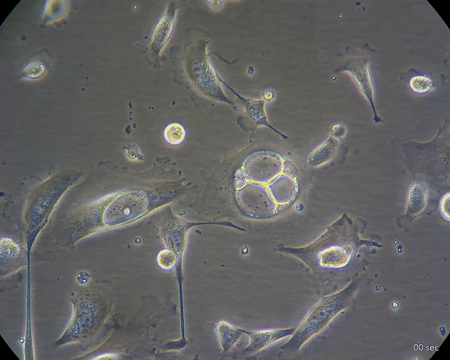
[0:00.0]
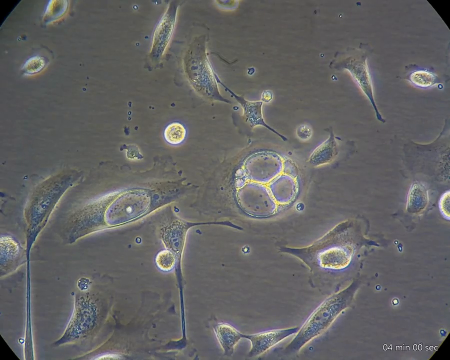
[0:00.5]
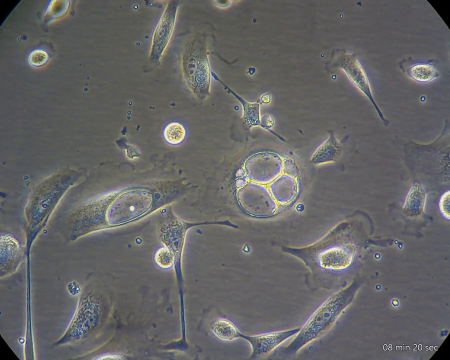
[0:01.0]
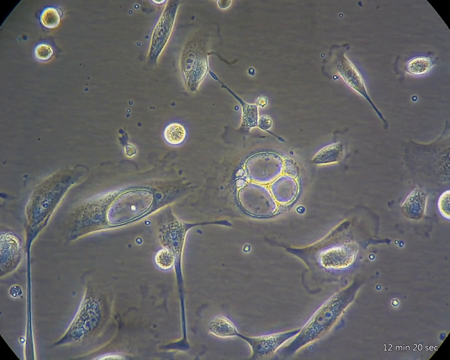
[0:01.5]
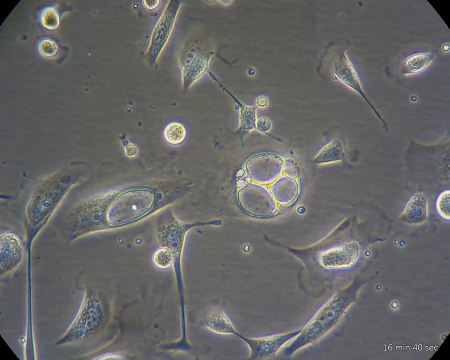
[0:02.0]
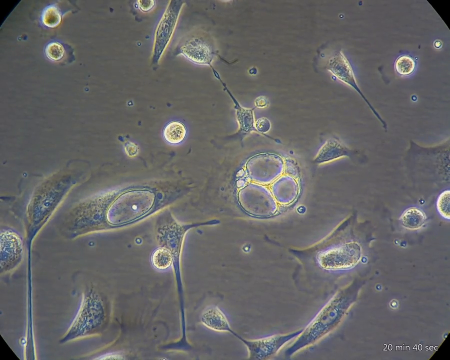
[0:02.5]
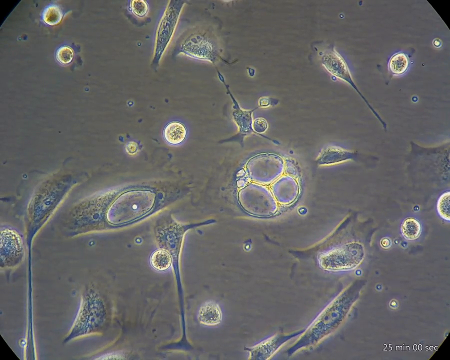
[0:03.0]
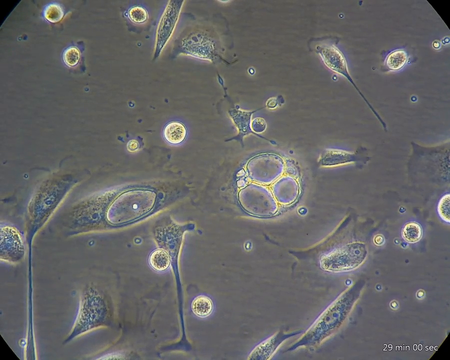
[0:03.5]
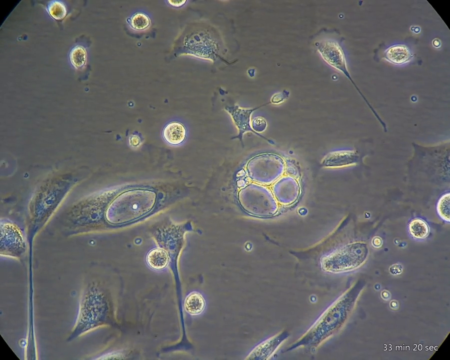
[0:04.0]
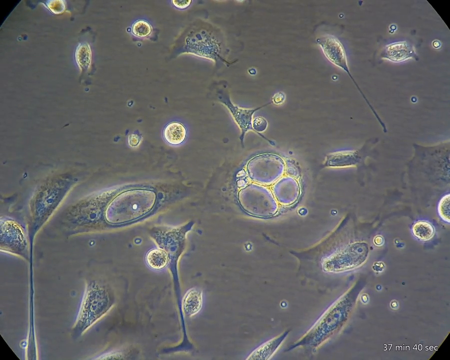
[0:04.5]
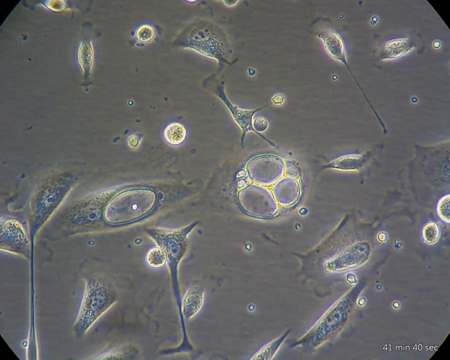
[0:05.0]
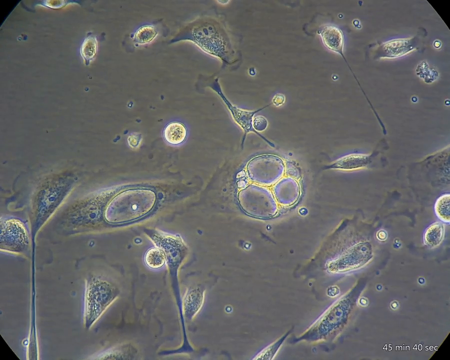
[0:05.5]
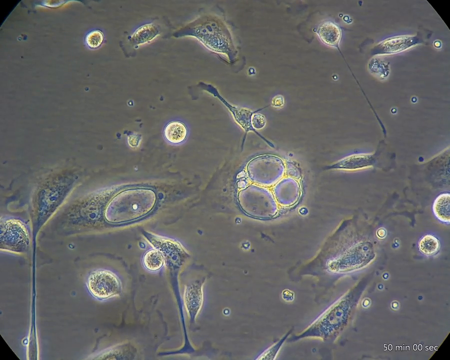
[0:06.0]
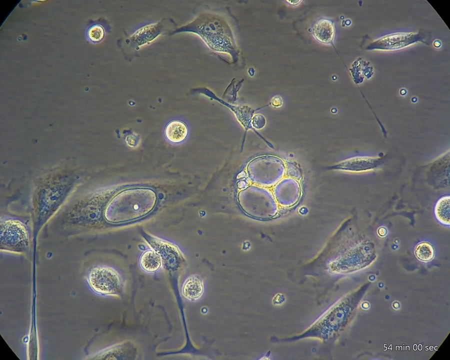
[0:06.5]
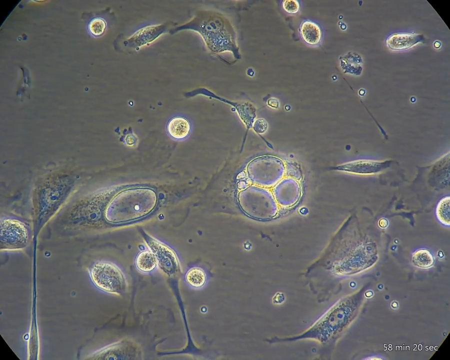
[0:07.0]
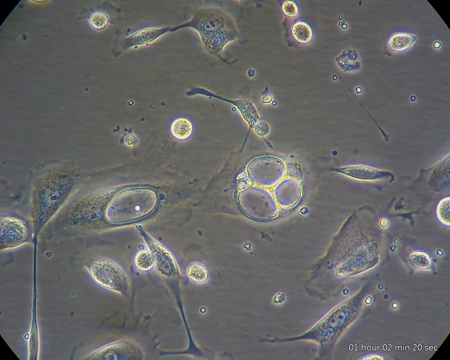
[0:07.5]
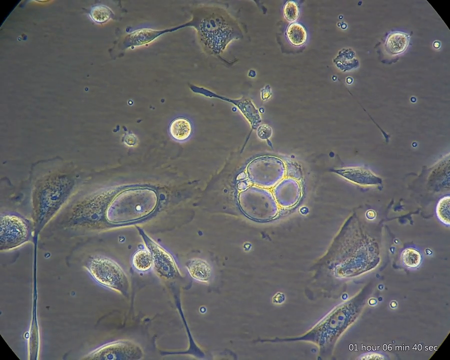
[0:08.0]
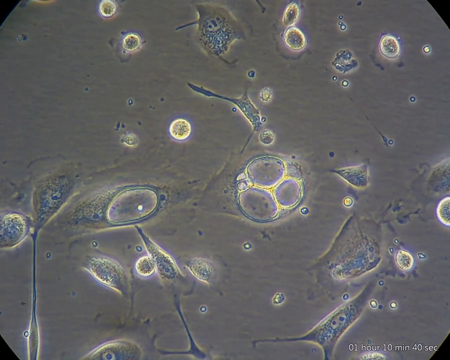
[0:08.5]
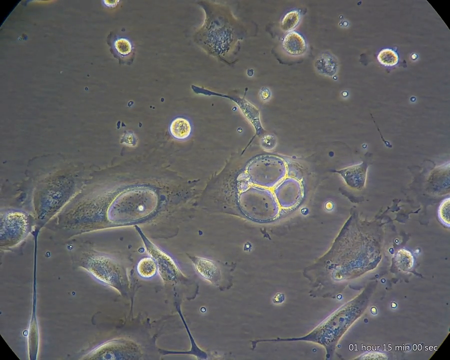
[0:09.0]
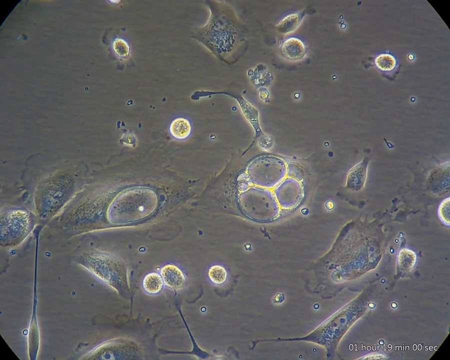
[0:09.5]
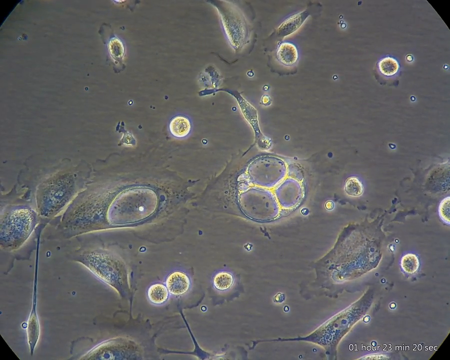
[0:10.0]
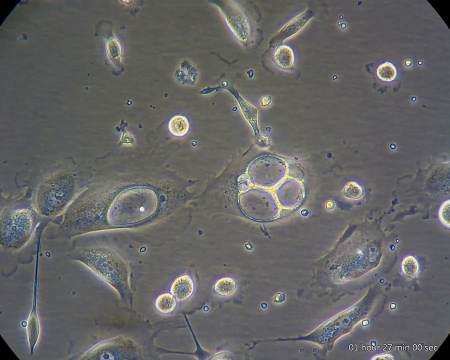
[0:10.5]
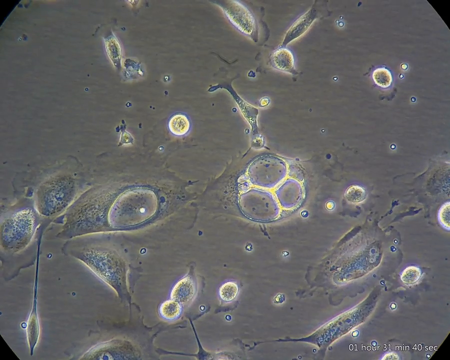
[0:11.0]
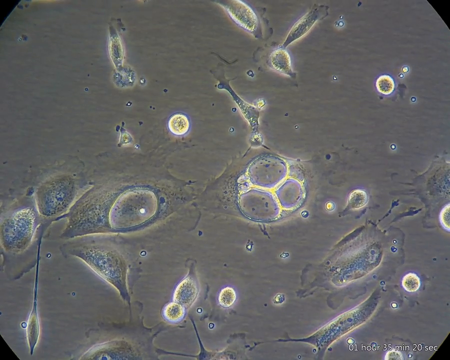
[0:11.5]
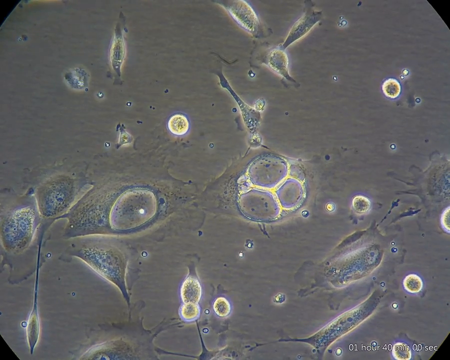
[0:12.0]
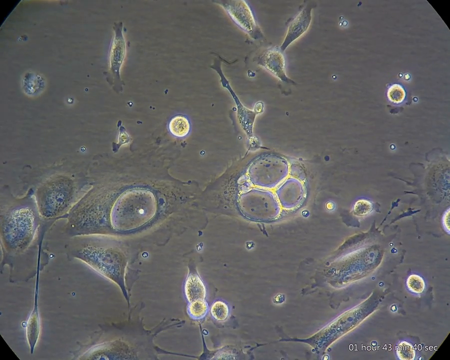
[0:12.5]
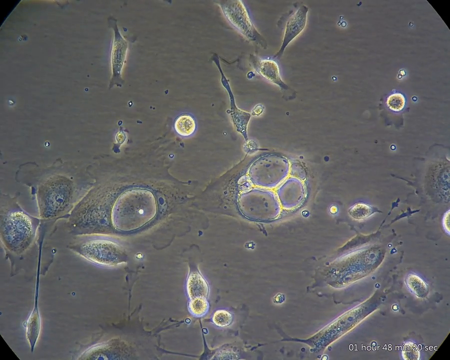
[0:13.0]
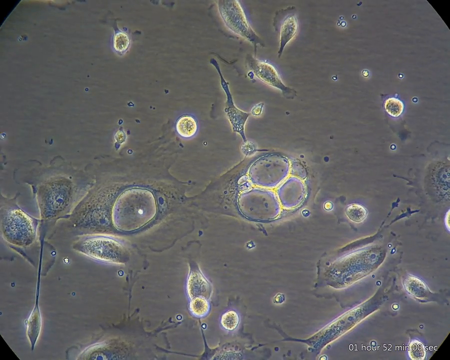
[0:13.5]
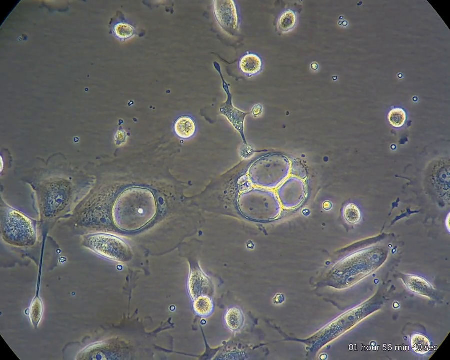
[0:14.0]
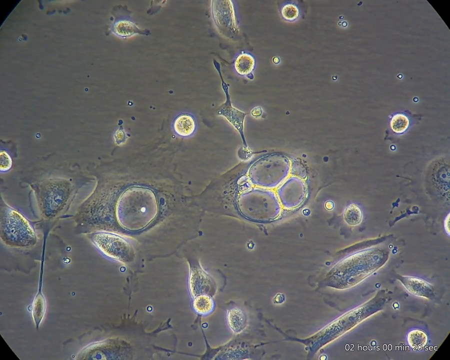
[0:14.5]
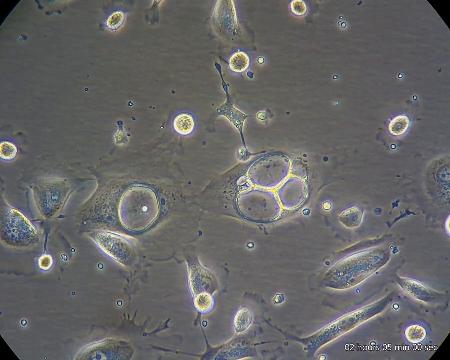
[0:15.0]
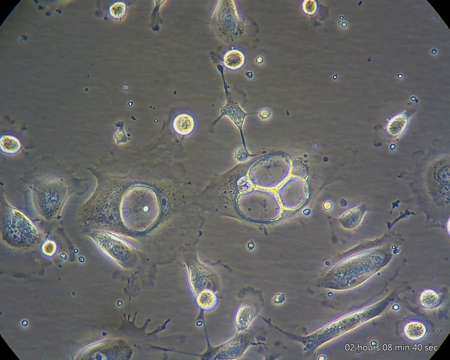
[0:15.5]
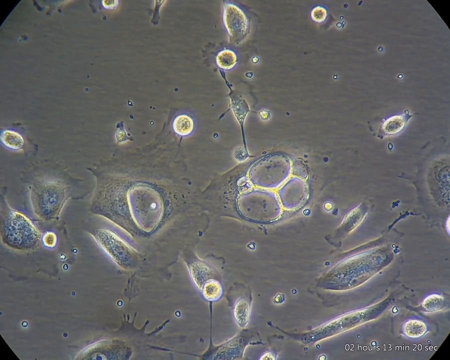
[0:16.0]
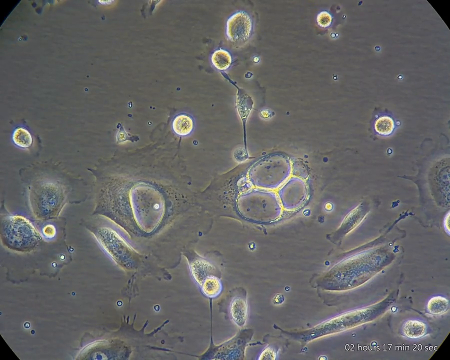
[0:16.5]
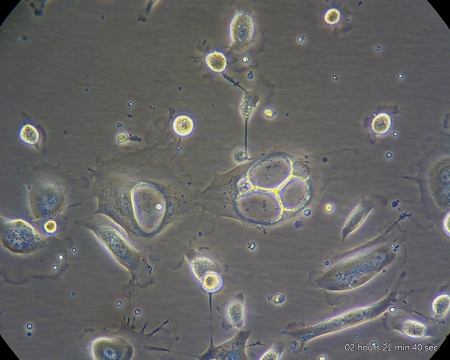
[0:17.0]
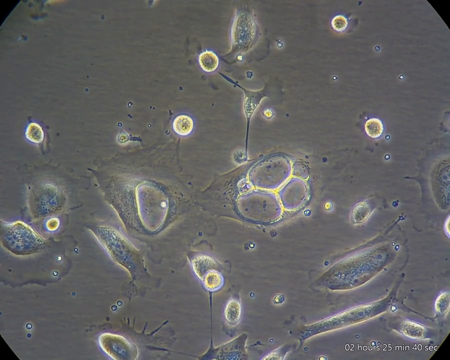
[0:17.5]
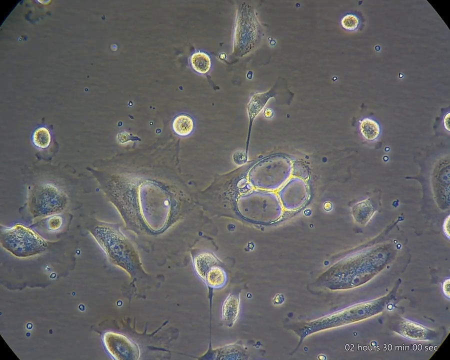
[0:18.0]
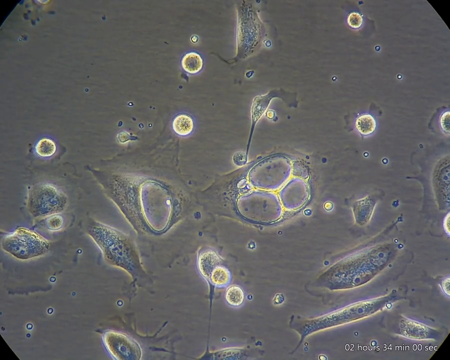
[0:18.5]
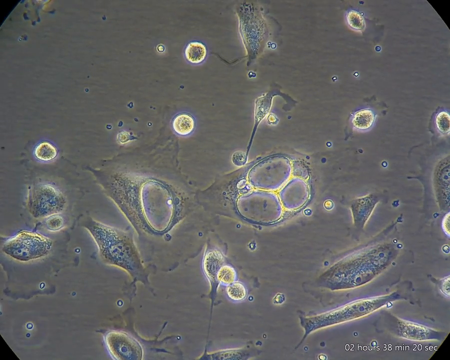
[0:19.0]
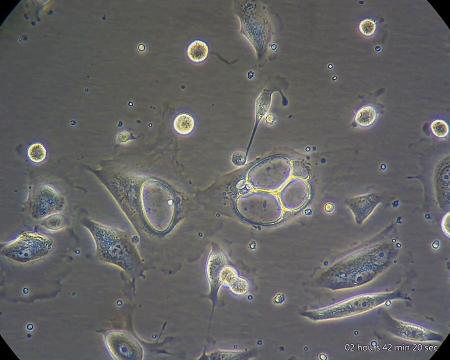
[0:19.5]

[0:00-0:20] What appears to be a culture sample of various germs is seen under a microscope. Some germs are circular and bright green; these move around slowly, especially the darker ones. One of them briefly morphs into an oval shape. Smaller germs, very small, circular and very bright, move around very fast. Some of these germs appear to latch on to other molecules, possibly bad germs being attacked by good germs. What appear to be various other types of liquids on the slide are fluid and moving around. There also appear to be other germs that are more fluid in shape and change shape a lot; one on the far bottom left keeps changing shape as it moves about.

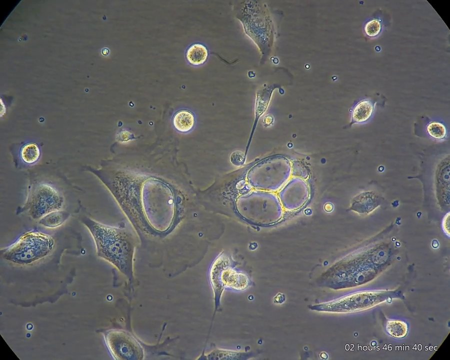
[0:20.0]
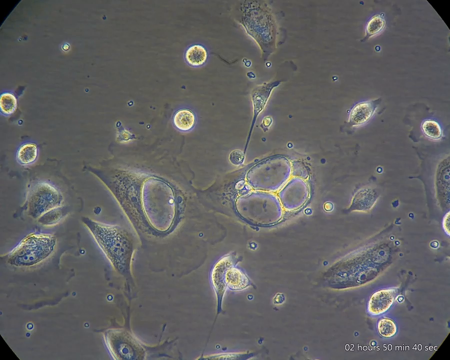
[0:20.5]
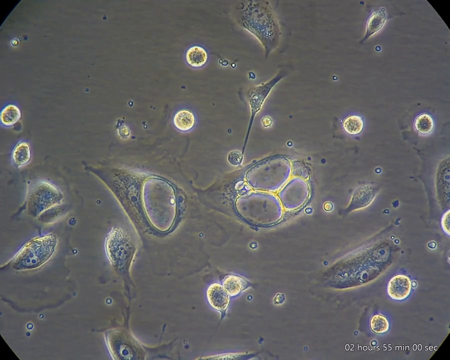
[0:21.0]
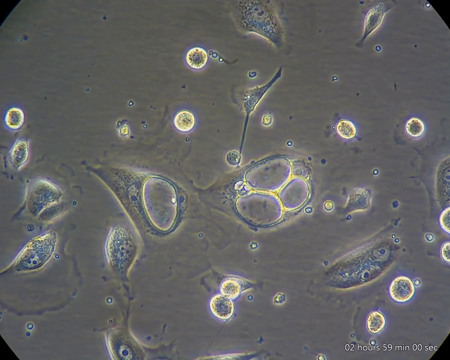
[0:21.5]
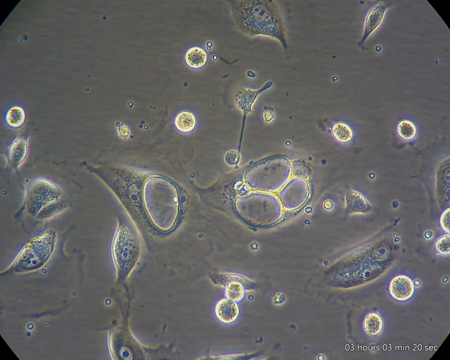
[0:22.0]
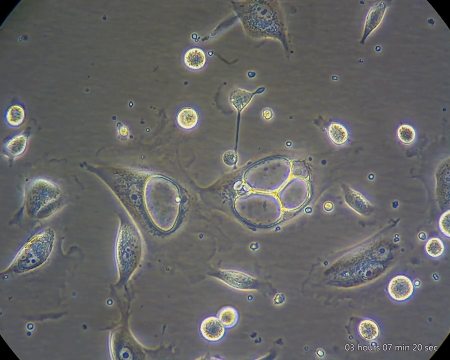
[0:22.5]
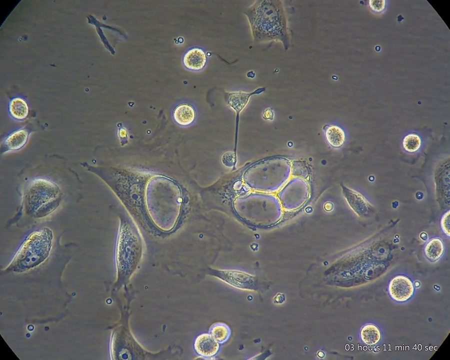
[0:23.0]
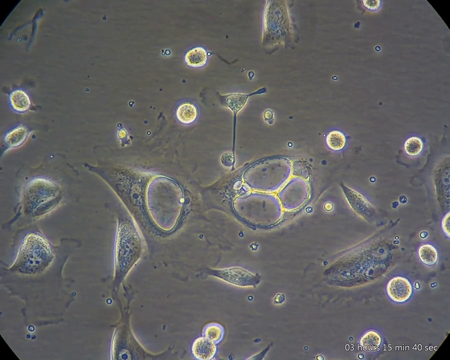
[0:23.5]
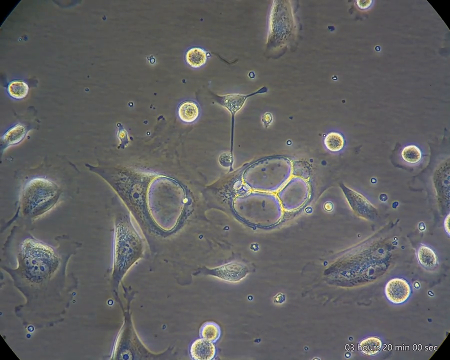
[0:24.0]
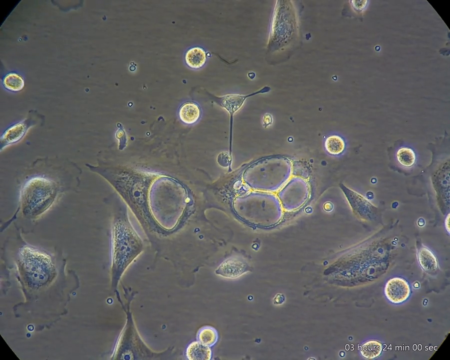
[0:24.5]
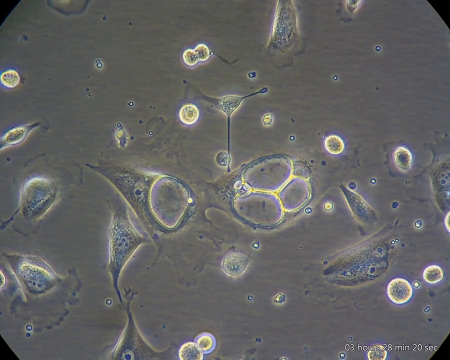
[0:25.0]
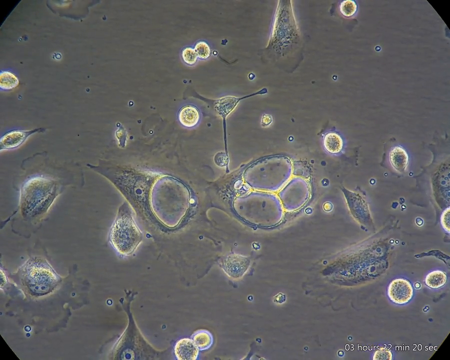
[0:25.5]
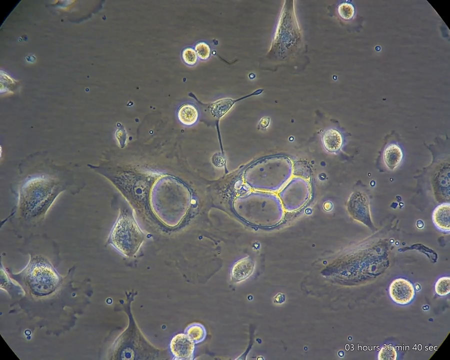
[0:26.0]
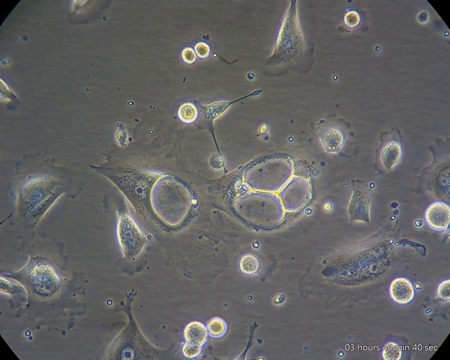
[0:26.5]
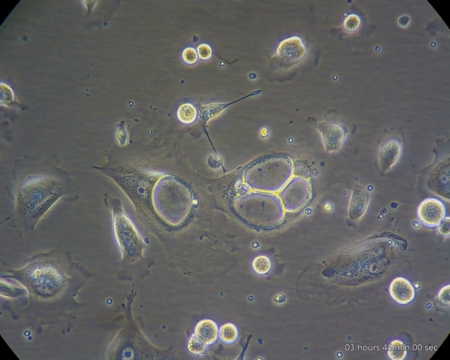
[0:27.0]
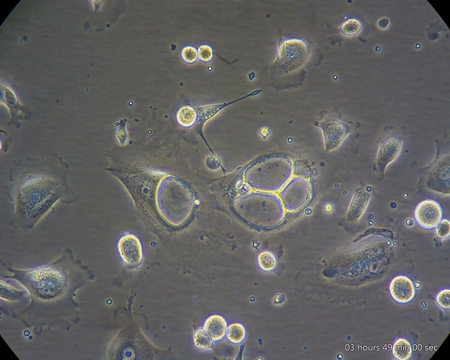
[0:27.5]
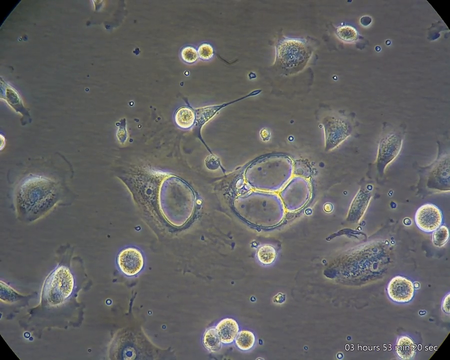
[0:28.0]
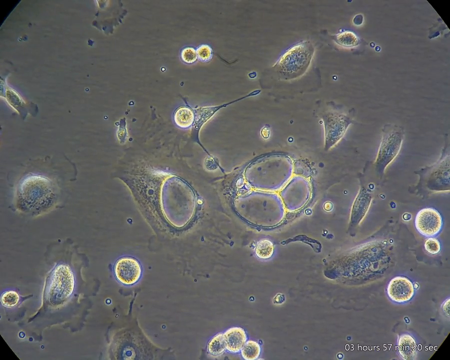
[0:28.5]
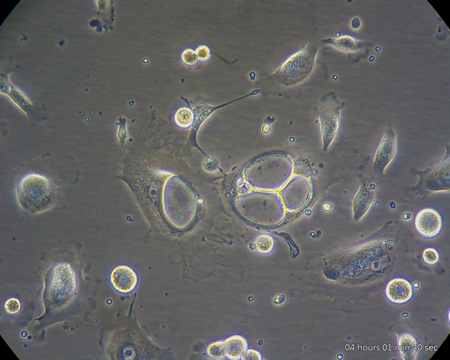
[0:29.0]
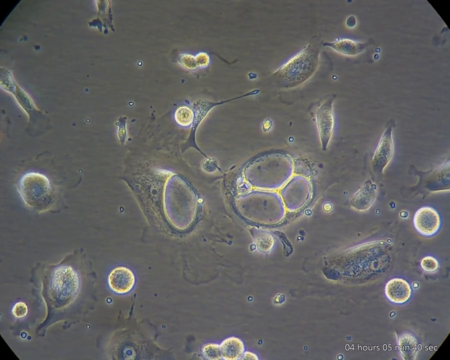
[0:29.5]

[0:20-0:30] Various molecules and germs move around. The smaller germs and molecules, round, very tiny and very hard to see, move very quickly, and some of them are very bright. The larger germs don't move as fast; they are more stationary and tend to stay in one place. At the top, something narrow that appears to be shaped like a wishbone moves very fast from the right to the left side and whizzes off the screen. Various other small molecules move around in the background.